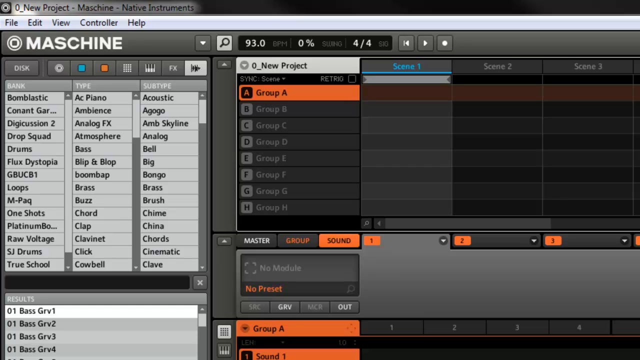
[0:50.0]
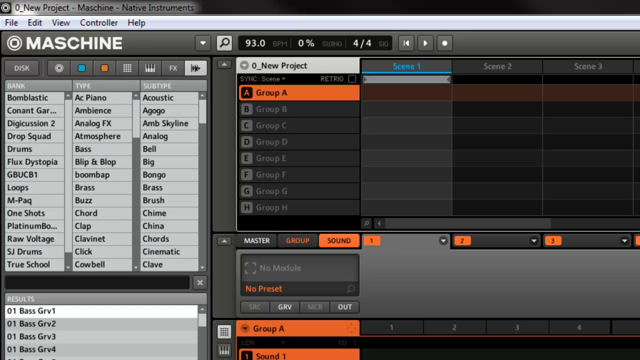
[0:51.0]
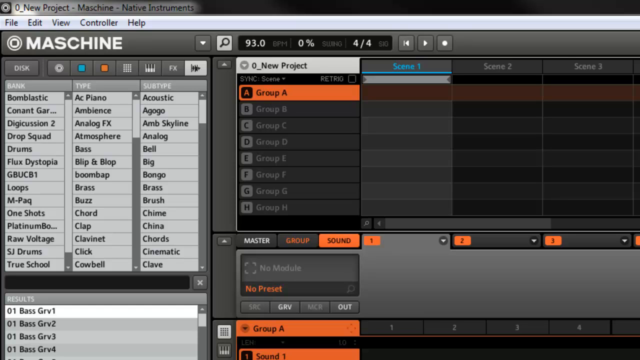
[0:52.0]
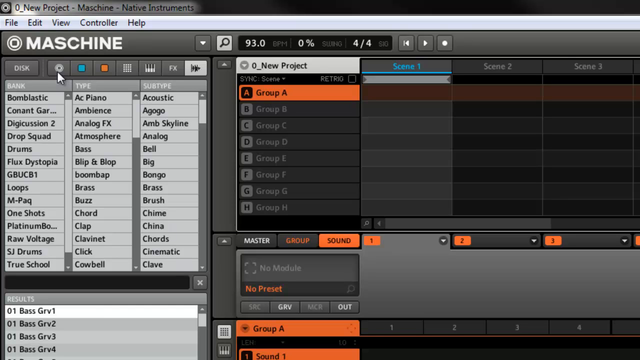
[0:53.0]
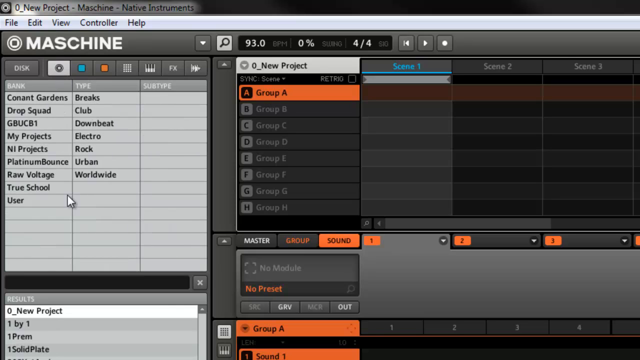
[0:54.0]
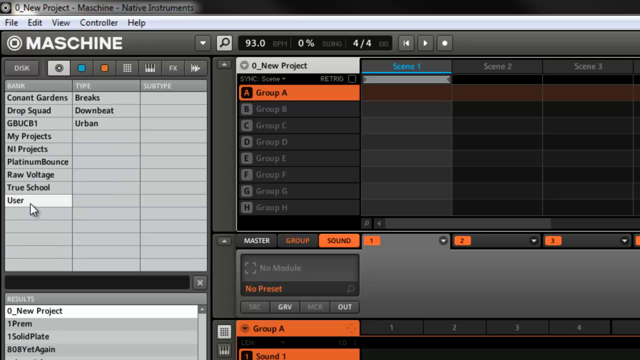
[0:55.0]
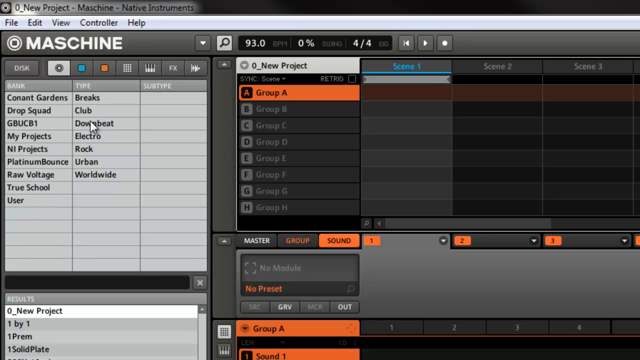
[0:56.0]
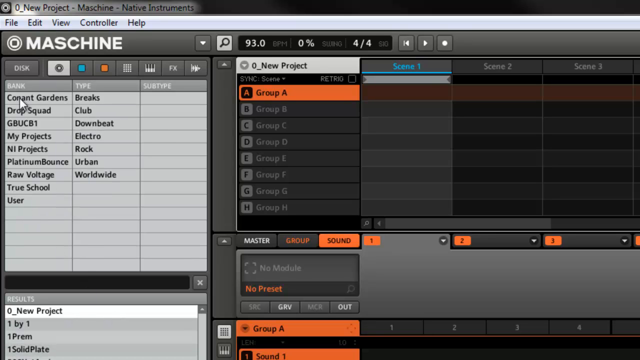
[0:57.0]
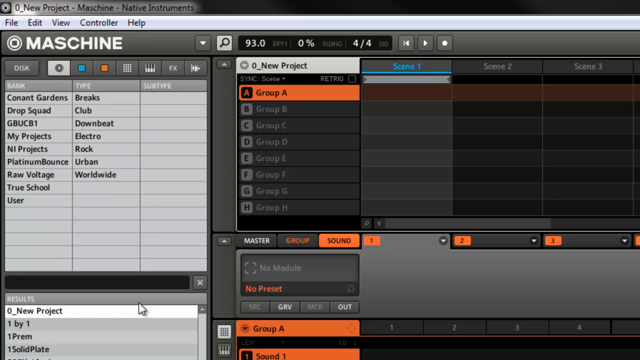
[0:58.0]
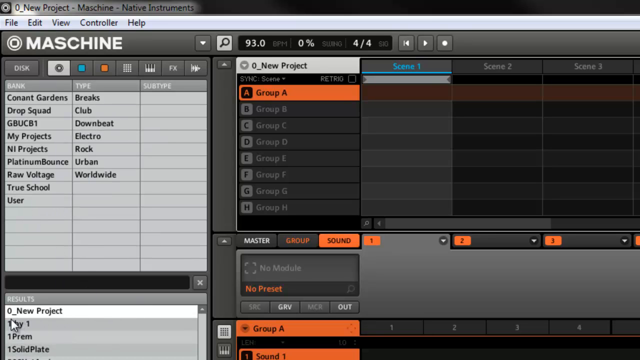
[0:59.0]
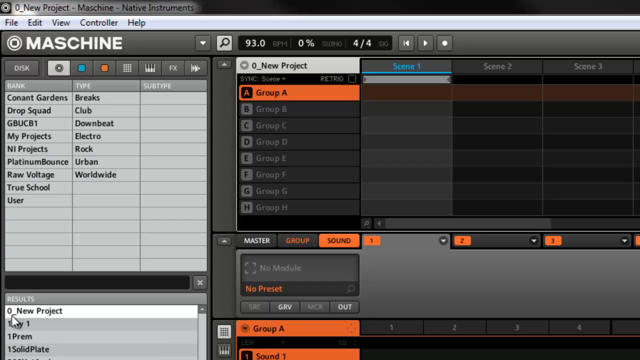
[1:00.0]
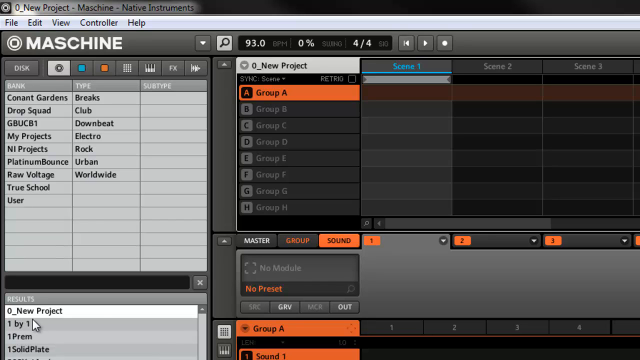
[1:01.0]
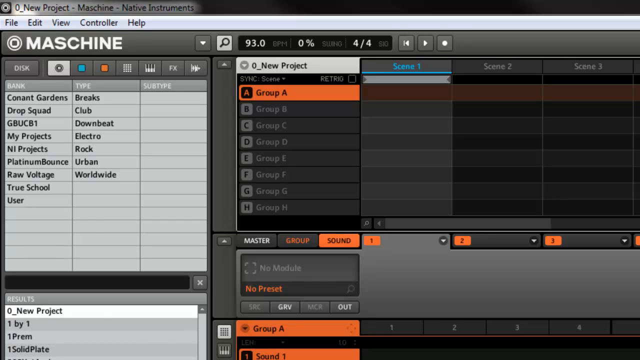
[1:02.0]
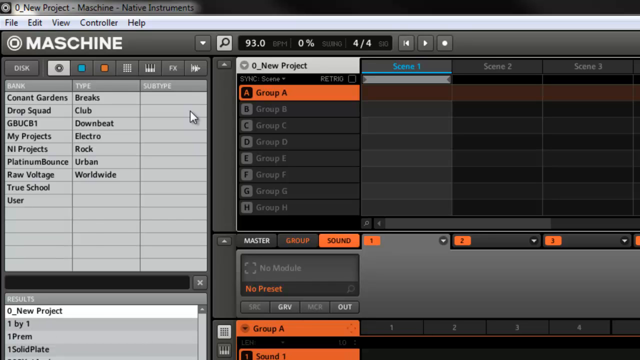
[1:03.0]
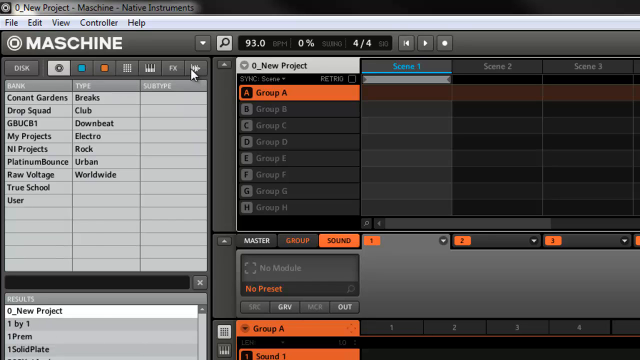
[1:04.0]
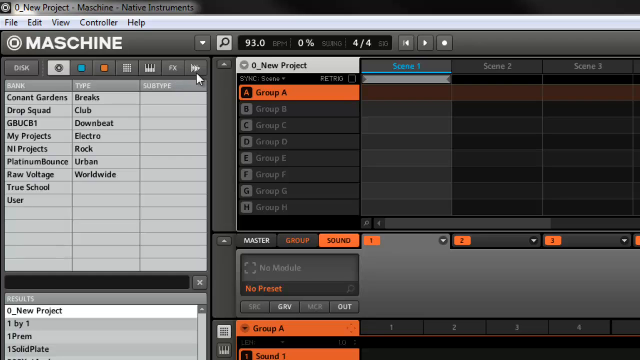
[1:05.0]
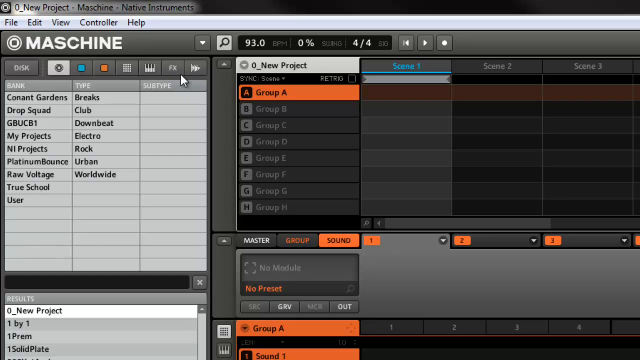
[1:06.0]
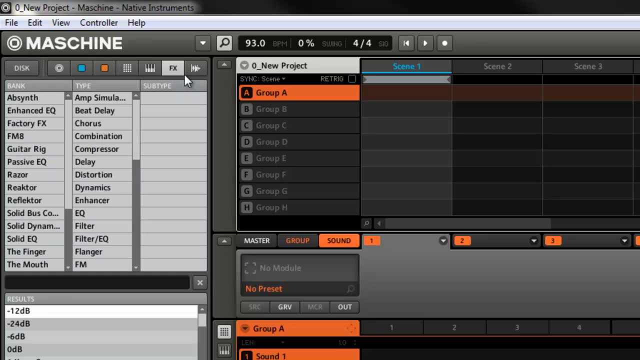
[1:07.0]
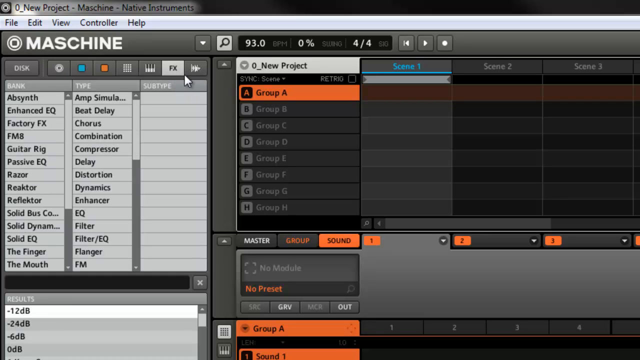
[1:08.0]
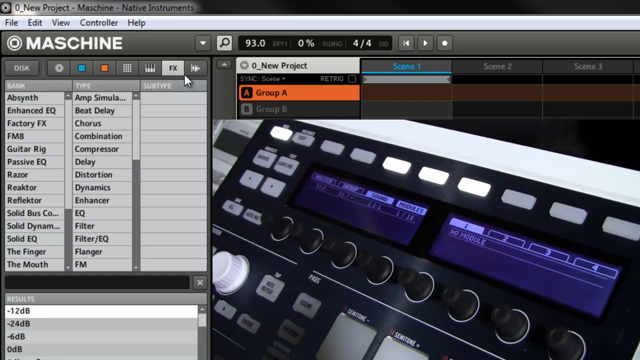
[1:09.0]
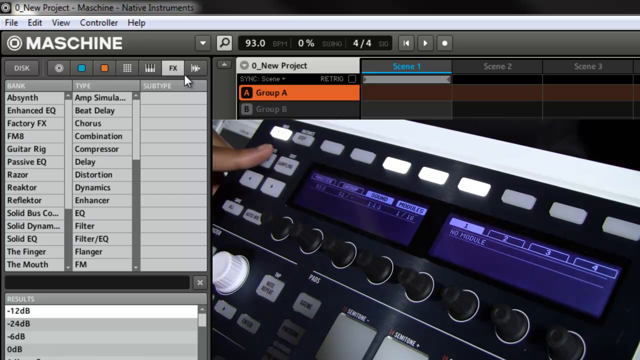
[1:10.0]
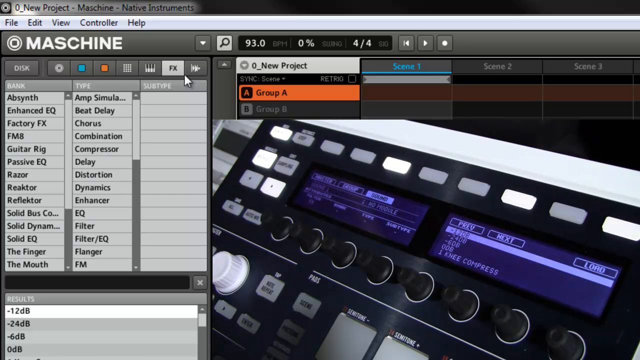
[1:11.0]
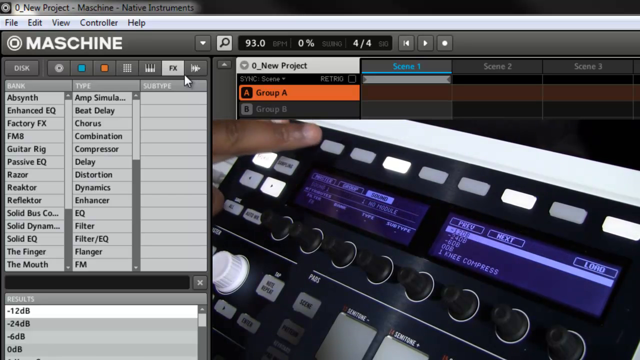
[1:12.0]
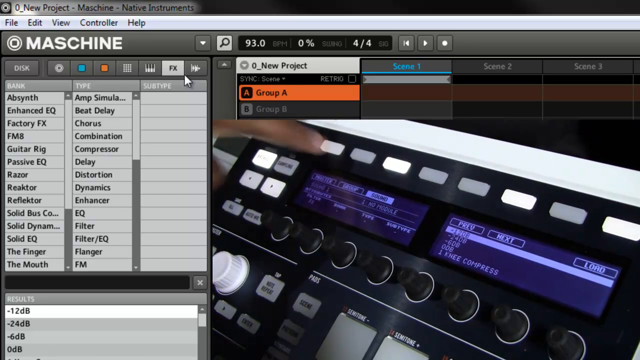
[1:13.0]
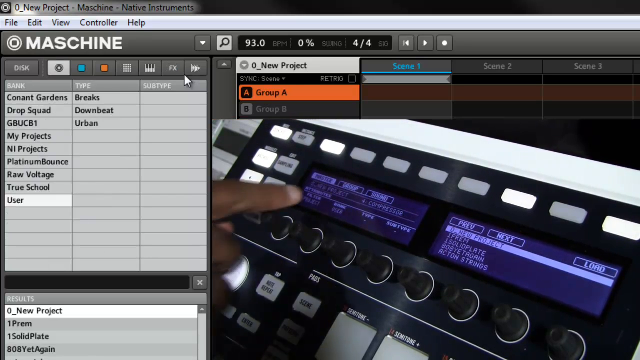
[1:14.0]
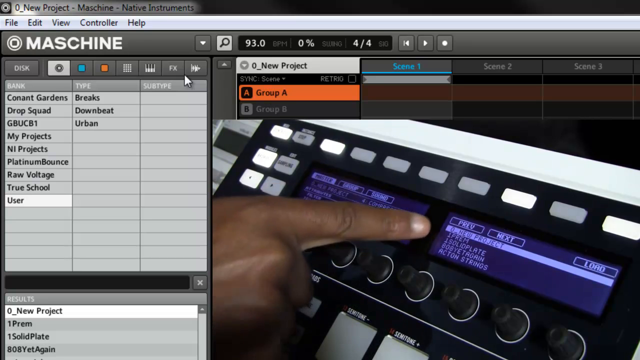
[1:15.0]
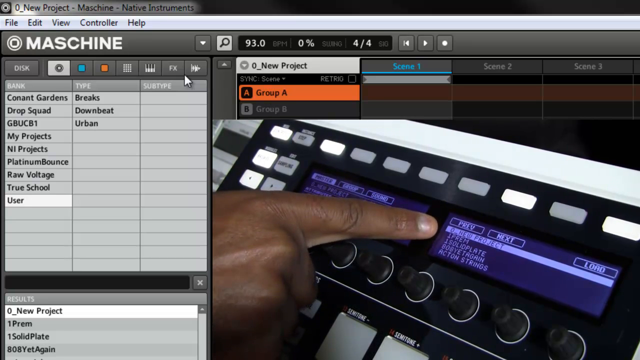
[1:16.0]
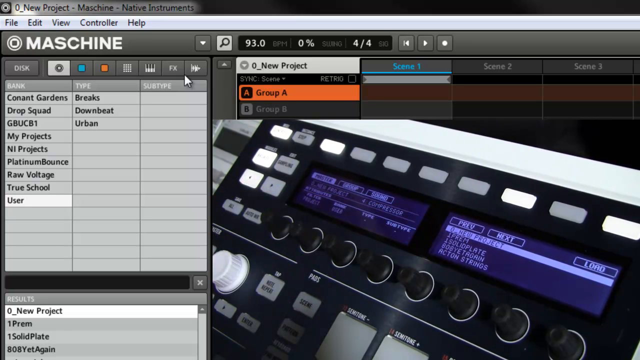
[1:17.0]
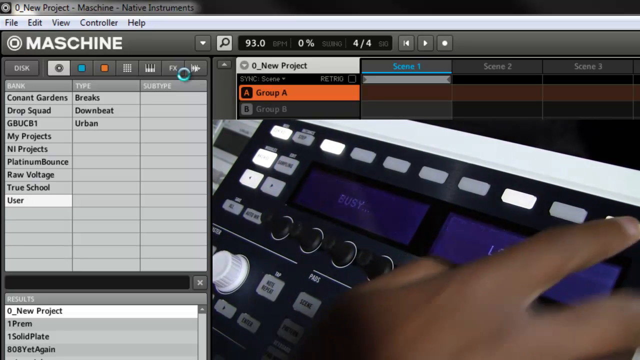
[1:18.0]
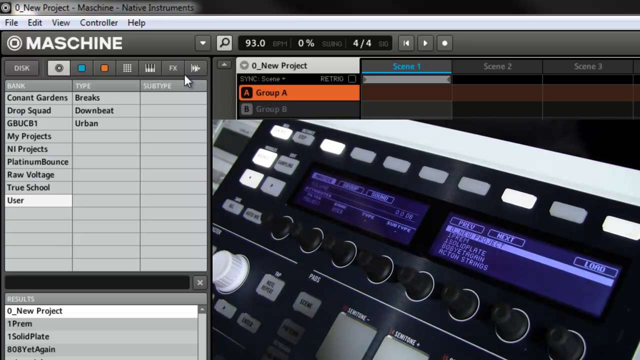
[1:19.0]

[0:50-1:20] The mouse moves over the sidebar on the left side of the application. The content of the sidebar appears to have changed: it still shows three columns, but their content is different. The third column on the right is empty, and the columns on the left are only about half full. One of the buttons at the top of the interface is selected, and the columns change again; the selected option has a white brightening behind it. In the bottom right of the screen, an overlay appears showing a video of a large analog control panel with two digital screens, many knobs below them, and lit-up white buttons surrounding them. A hand comes in from the left side of the screen and touches one of the buttons, which lights up, and the content of the screens changes. The hand is immediately withdrawn, then comes back in and pushes one of the small buttons on the top. The person points to both screens, and when going over to the right screen he lingers over it for a few moments, appearing to point to the top option, which is highlighted. He withdraws his hands to the left side of the screen, then reaches up from the bottom of the screen to touch one of the buttons above the right screen.